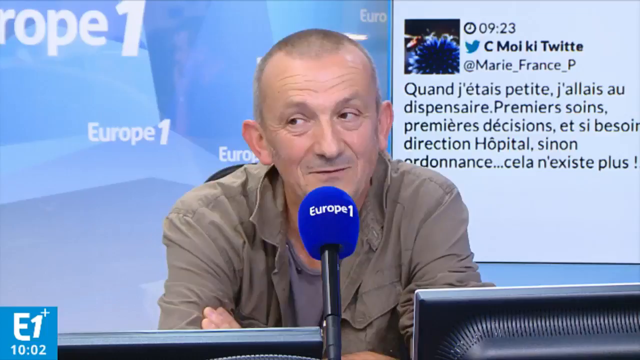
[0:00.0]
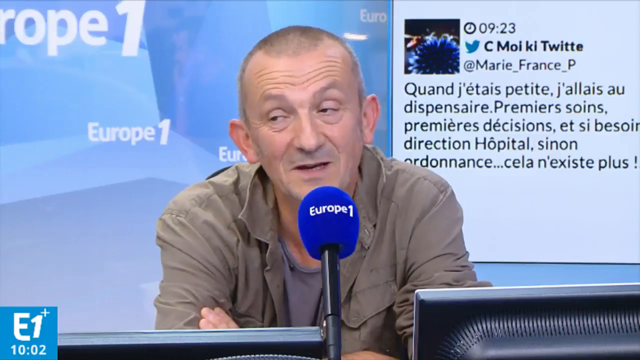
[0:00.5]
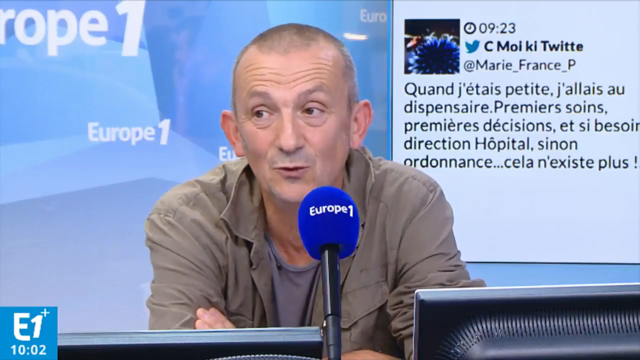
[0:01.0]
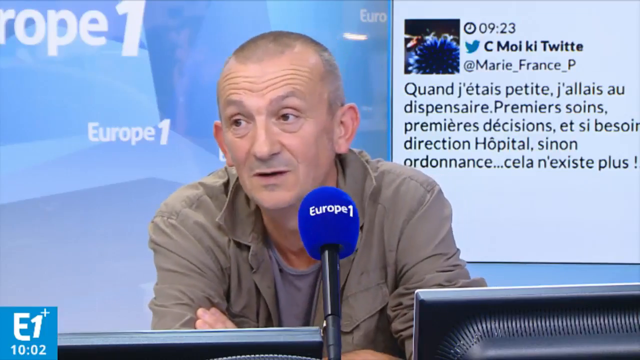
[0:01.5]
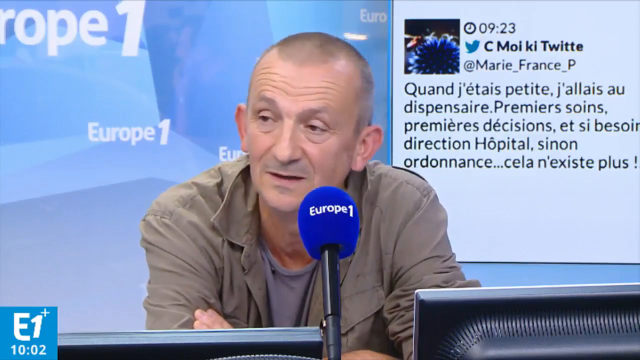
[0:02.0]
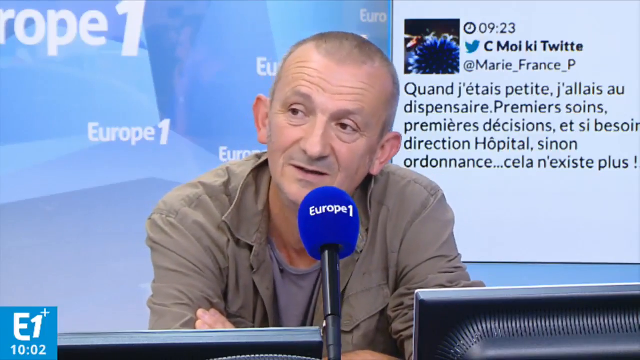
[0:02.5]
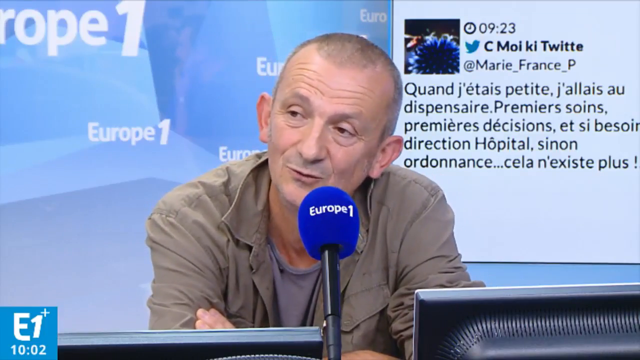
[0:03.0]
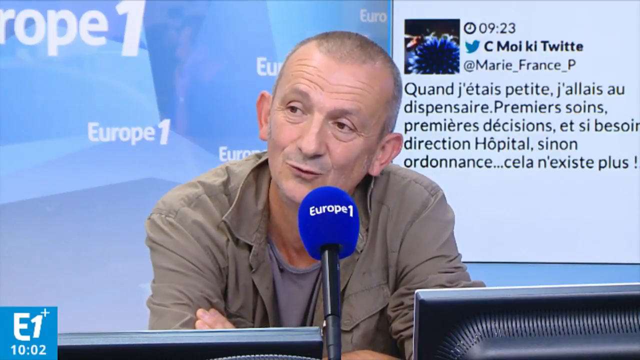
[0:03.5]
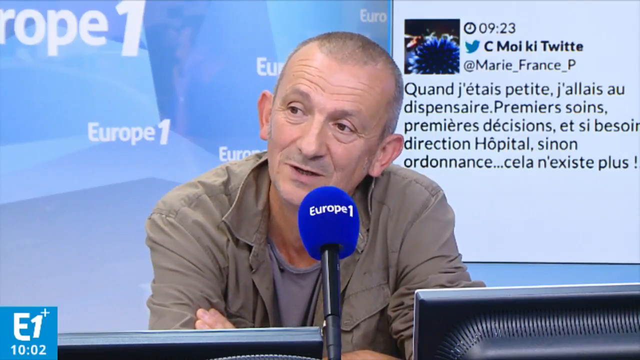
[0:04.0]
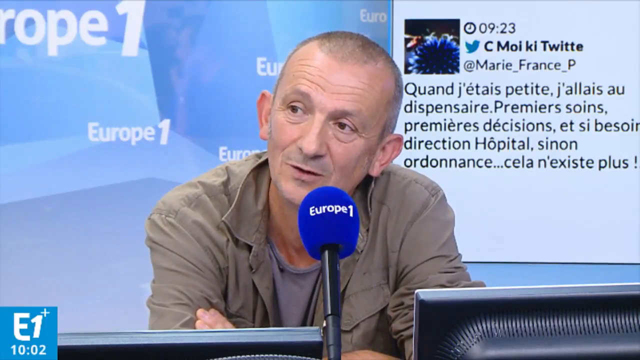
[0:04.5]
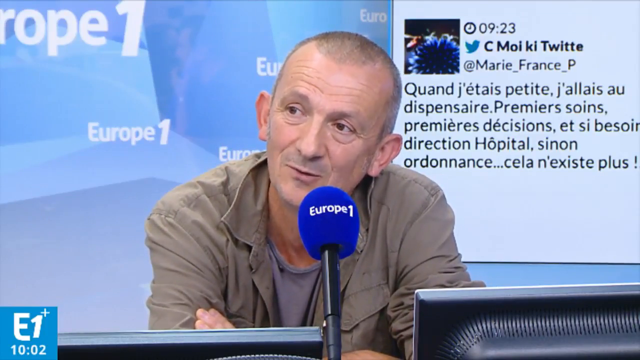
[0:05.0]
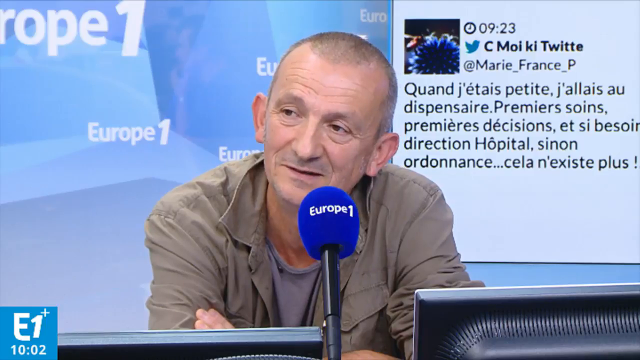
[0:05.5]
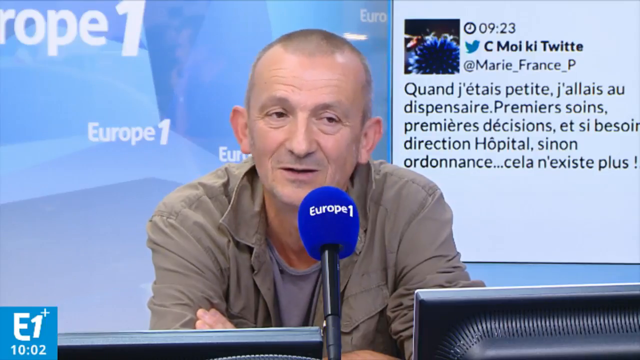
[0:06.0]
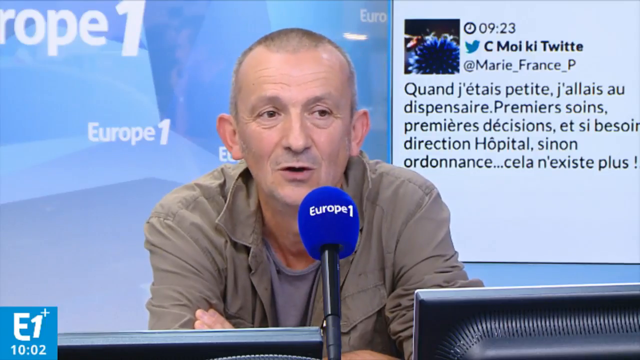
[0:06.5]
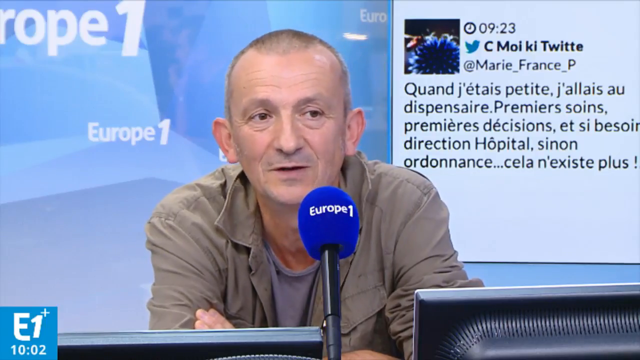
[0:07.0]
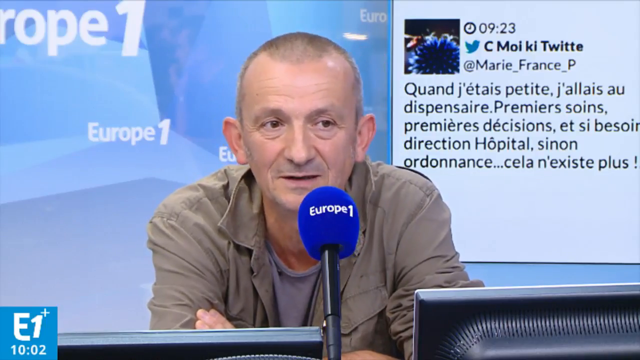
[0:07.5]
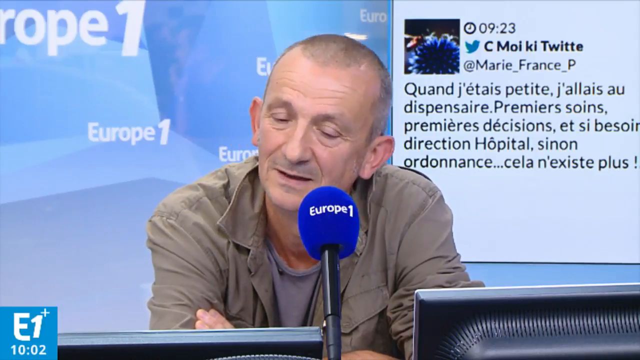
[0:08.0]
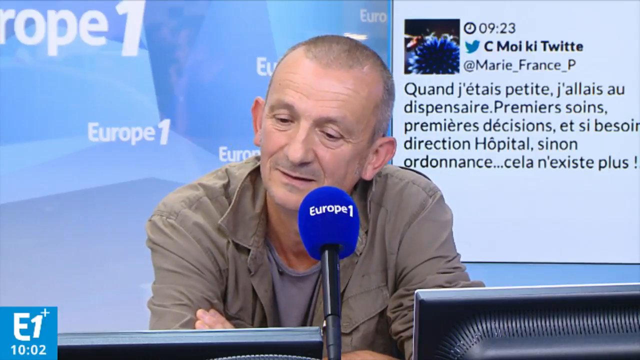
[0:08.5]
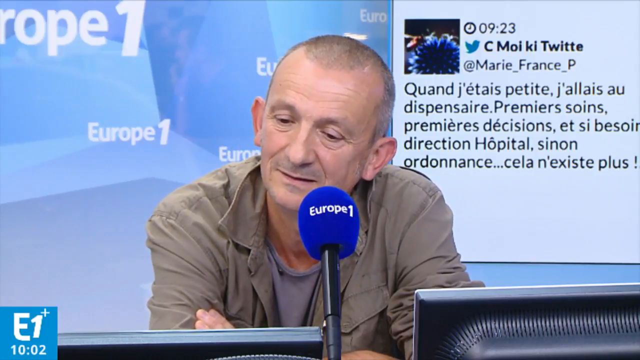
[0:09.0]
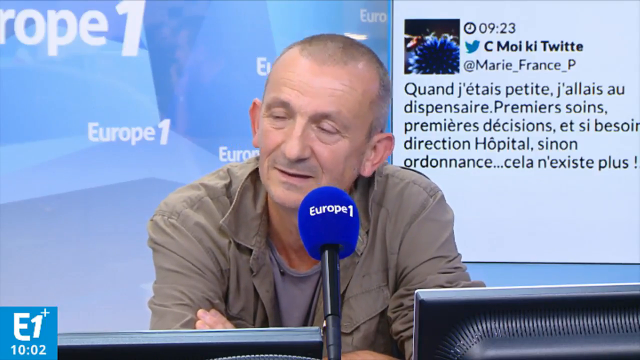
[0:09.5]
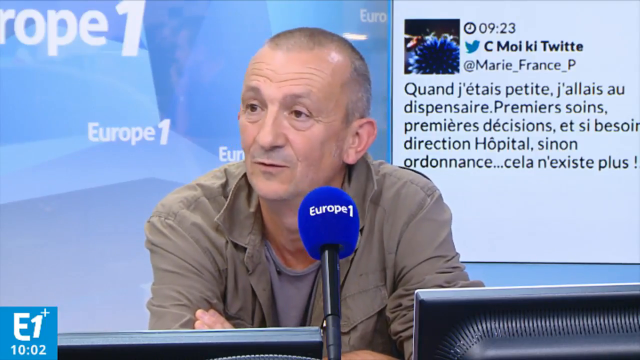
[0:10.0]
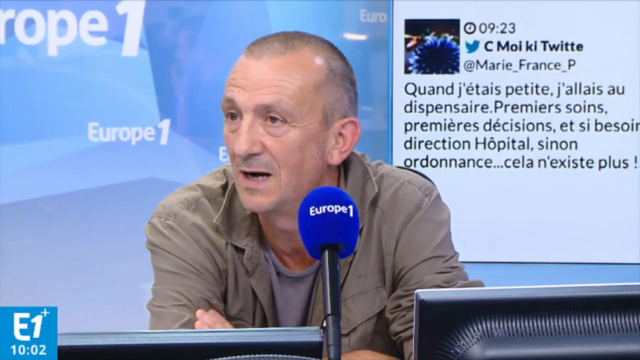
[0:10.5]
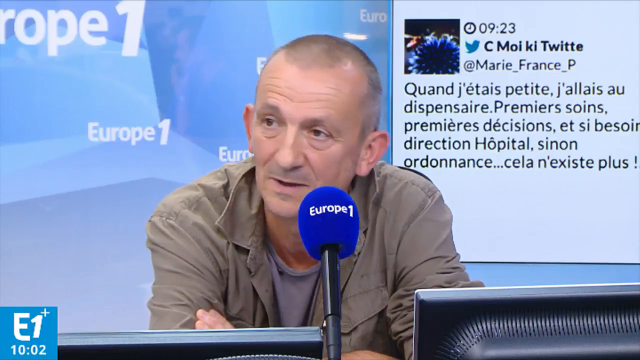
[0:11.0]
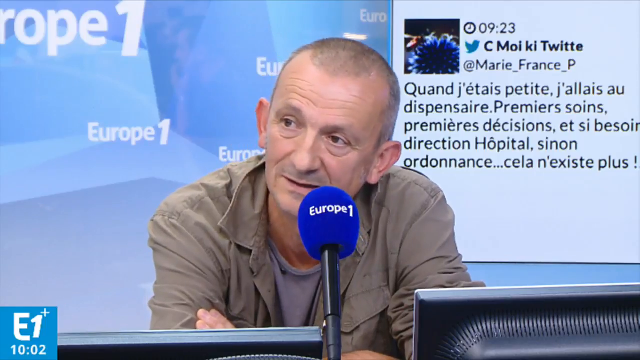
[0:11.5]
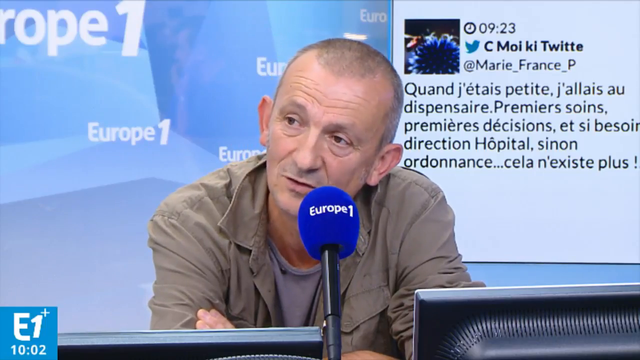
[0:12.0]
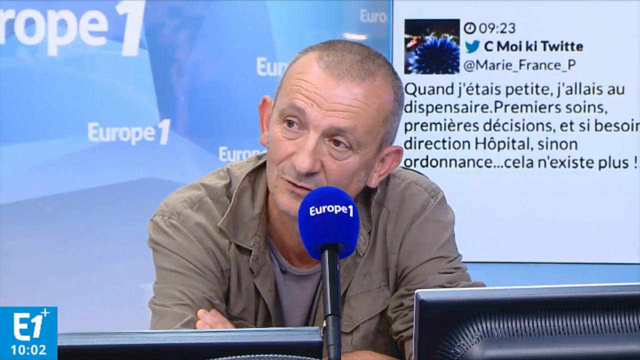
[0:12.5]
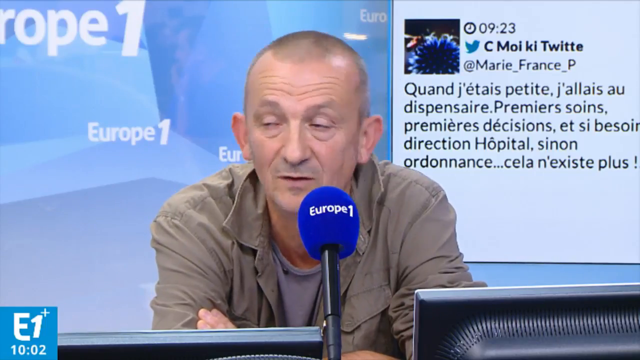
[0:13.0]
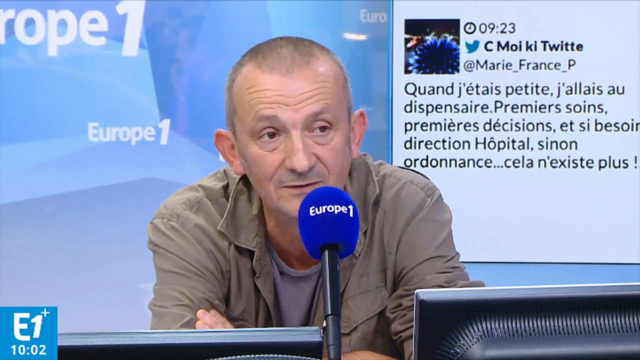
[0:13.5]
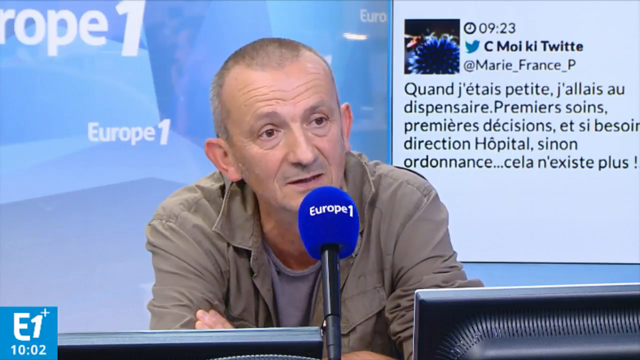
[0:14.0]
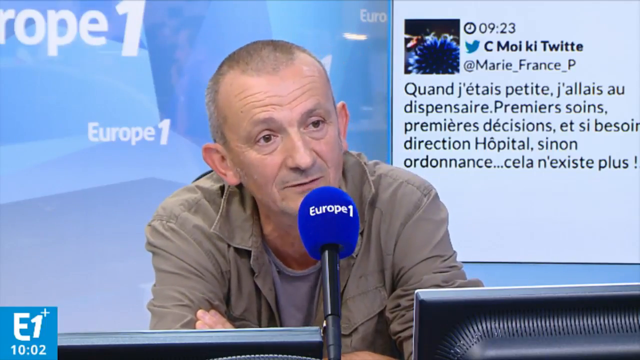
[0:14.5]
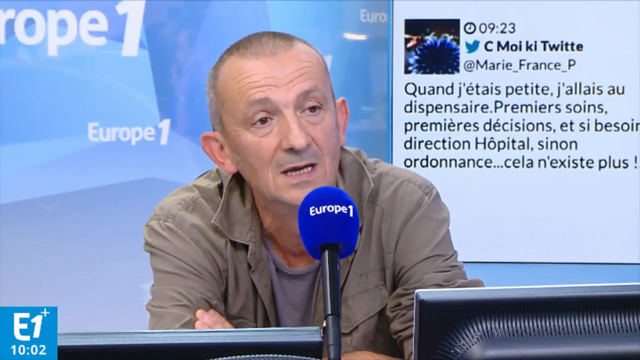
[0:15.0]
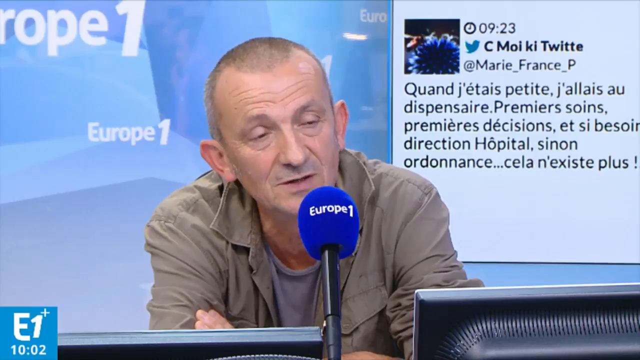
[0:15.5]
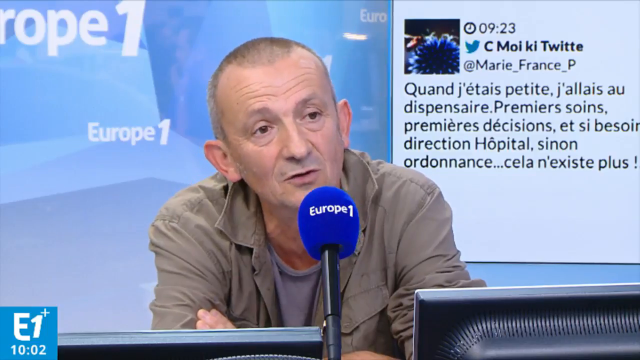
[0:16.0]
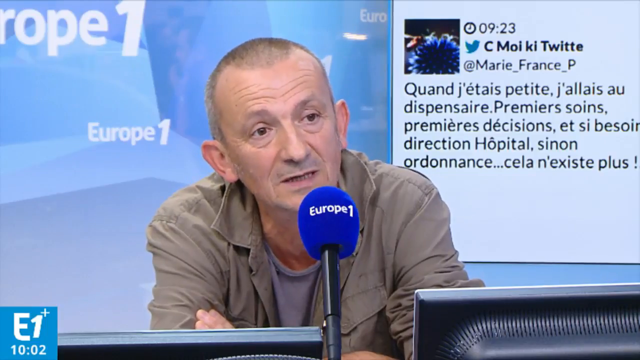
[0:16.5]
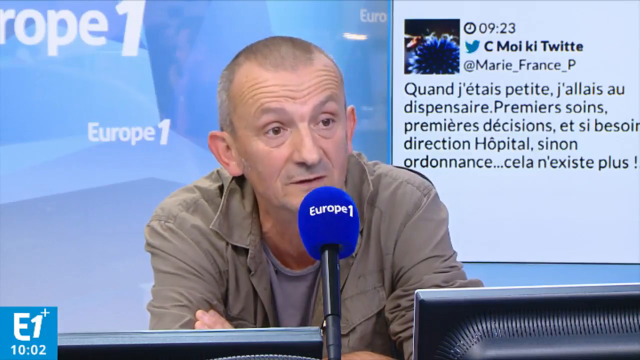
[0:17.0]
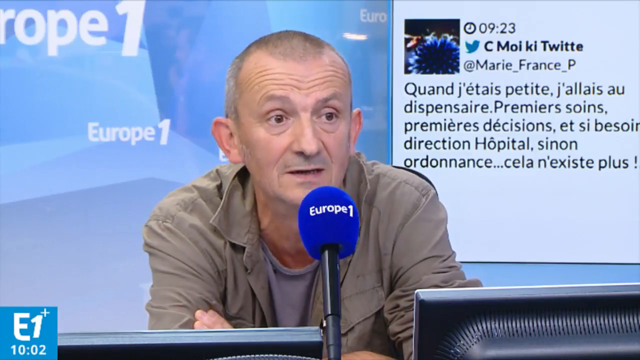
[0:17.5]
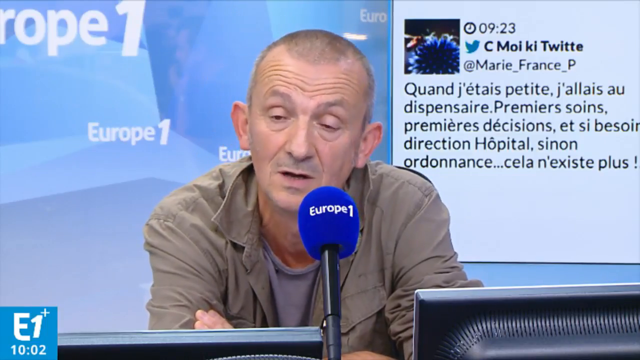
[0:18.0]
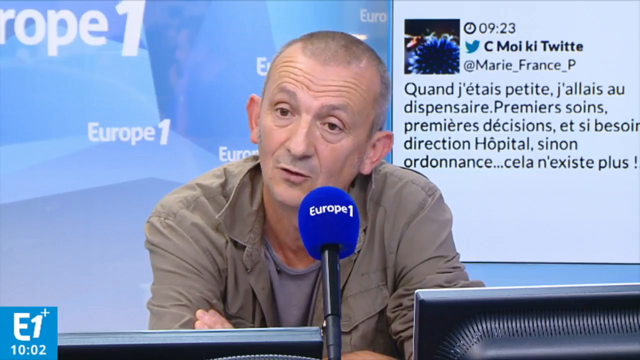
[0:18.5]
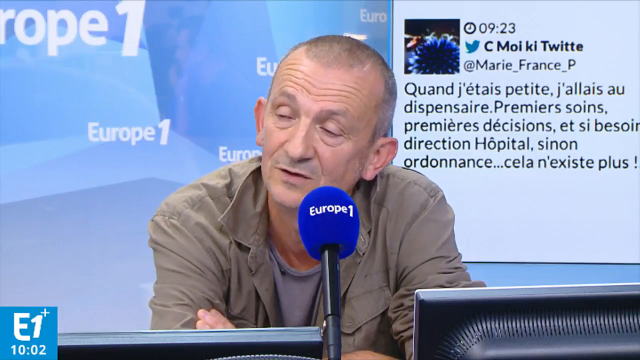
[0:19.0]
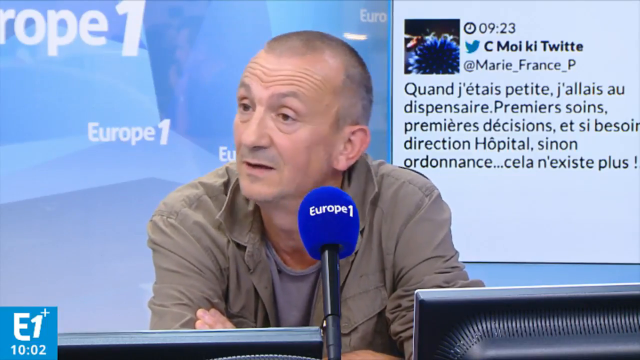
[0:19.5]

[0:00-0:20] An old man, apparently in his late 60s, is talking. Behind him is a TV: one side shows text in an unidentified language that cannot be read, along with the time, 23 past 9, and the other half is sky blue with "Europe 1" written on it. He talks into a blue microphone with "Europe 1" written on it in white. He appears to be in a studio, and he seems to be talking to someone rather than to the viewers, as if he is being interviewed or is interviewing someone. In front of him are two laptops.